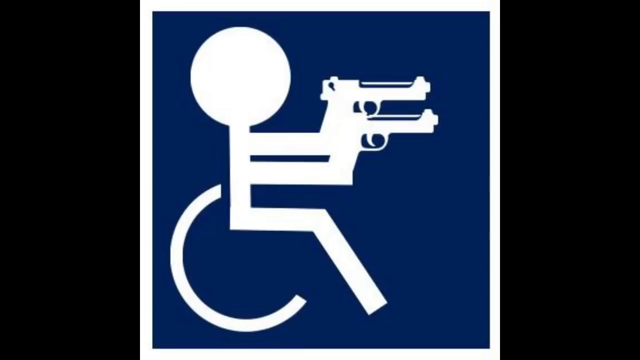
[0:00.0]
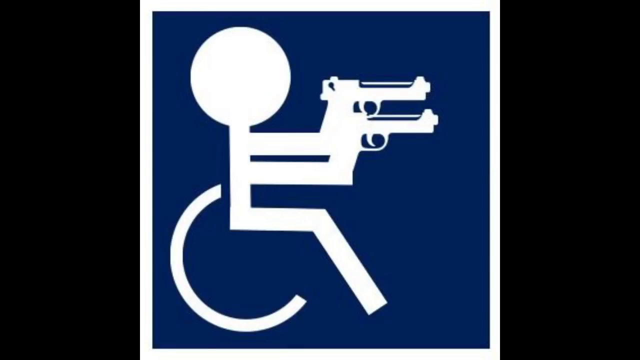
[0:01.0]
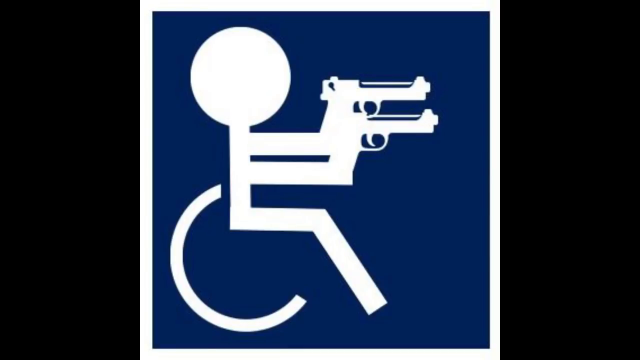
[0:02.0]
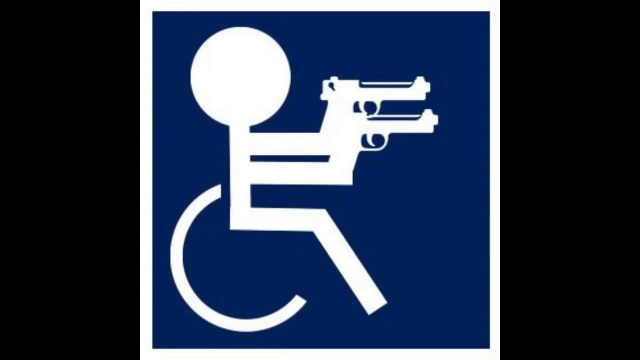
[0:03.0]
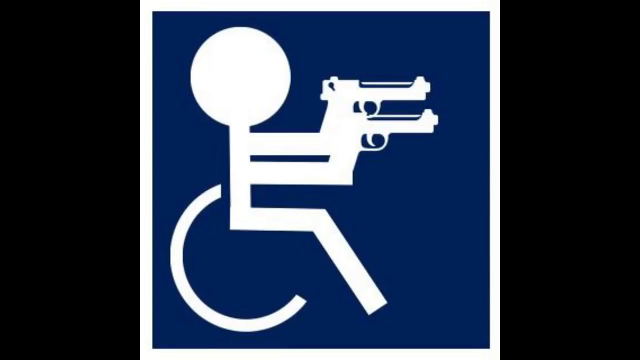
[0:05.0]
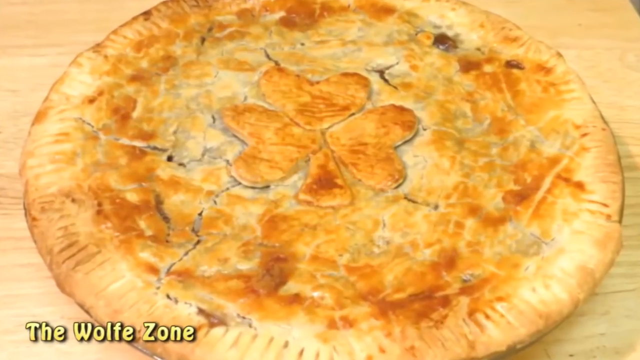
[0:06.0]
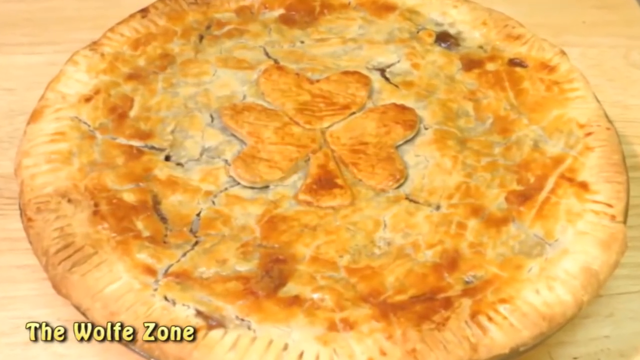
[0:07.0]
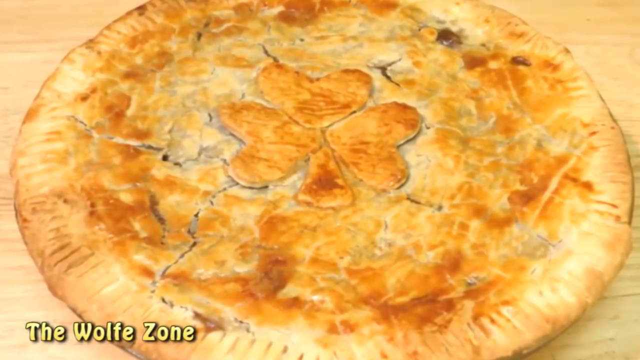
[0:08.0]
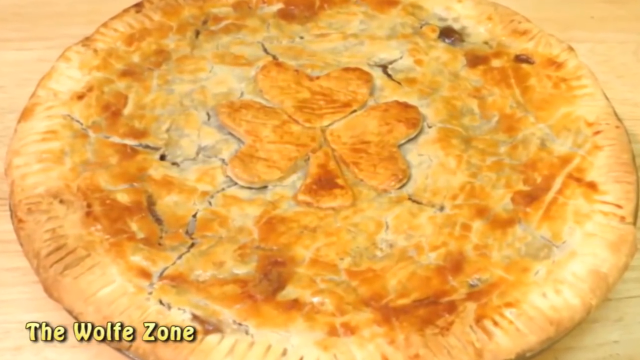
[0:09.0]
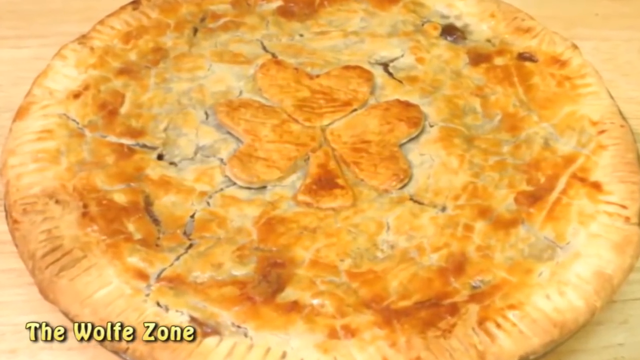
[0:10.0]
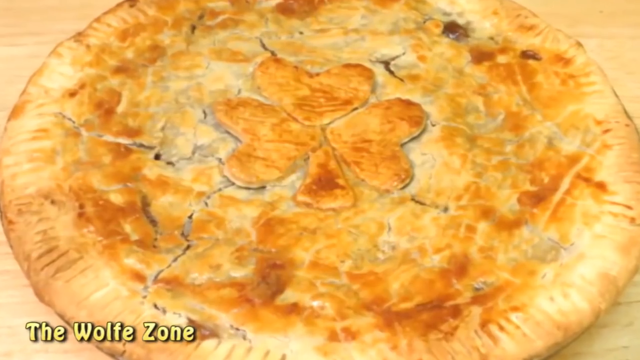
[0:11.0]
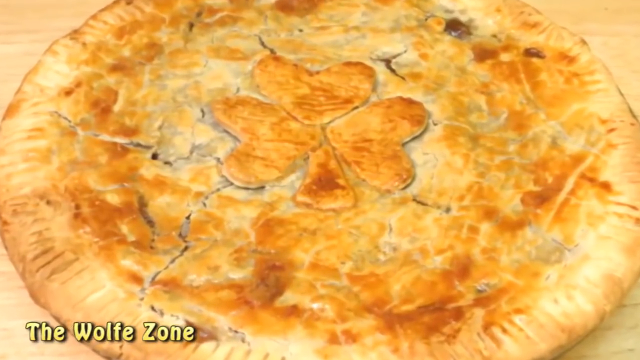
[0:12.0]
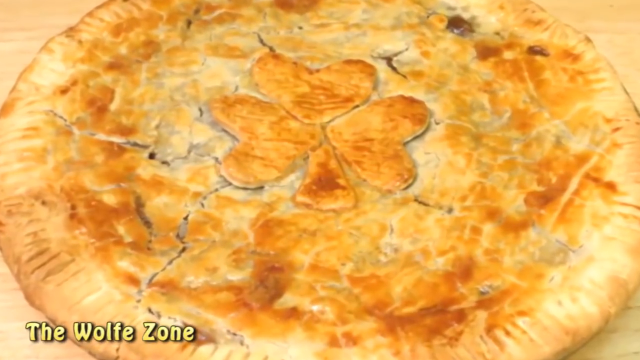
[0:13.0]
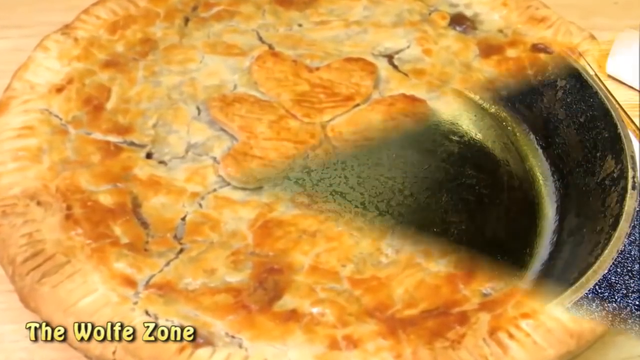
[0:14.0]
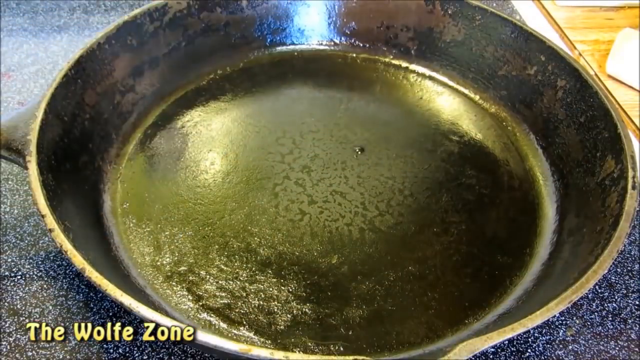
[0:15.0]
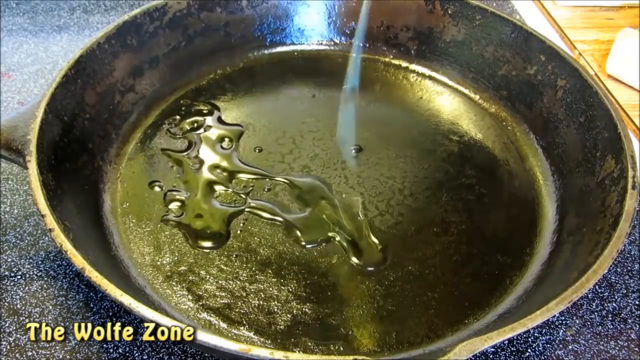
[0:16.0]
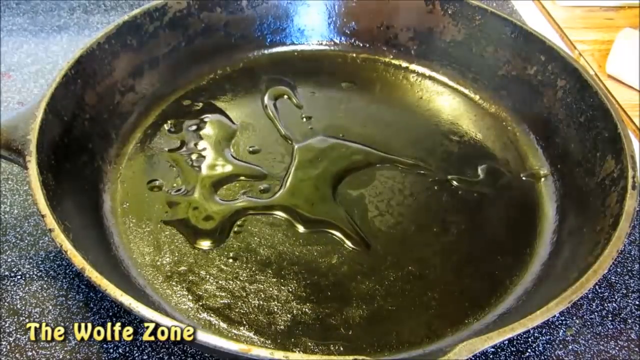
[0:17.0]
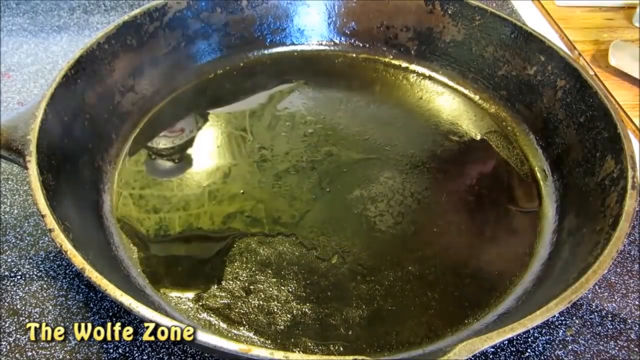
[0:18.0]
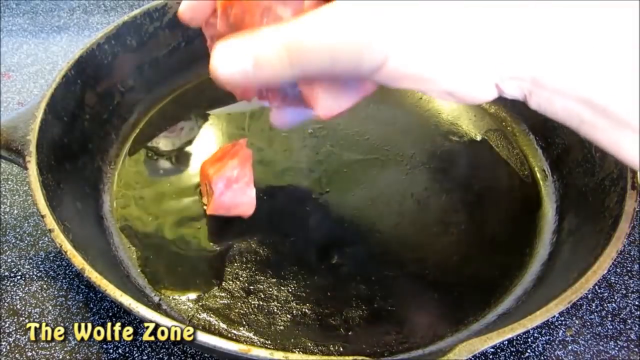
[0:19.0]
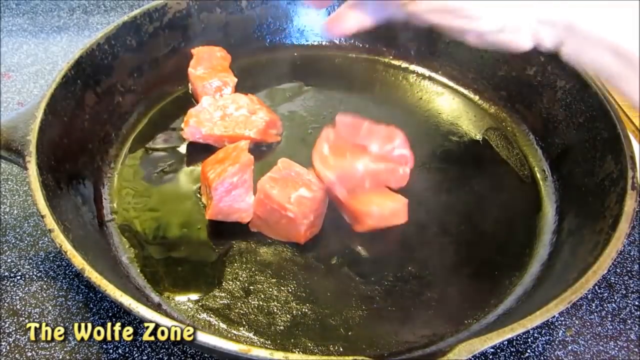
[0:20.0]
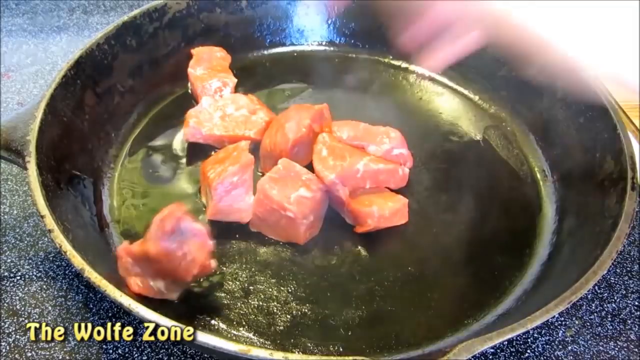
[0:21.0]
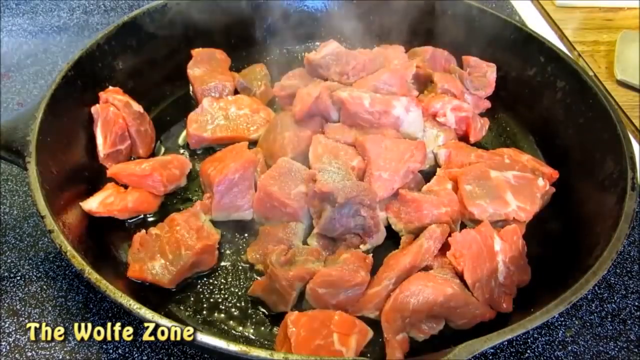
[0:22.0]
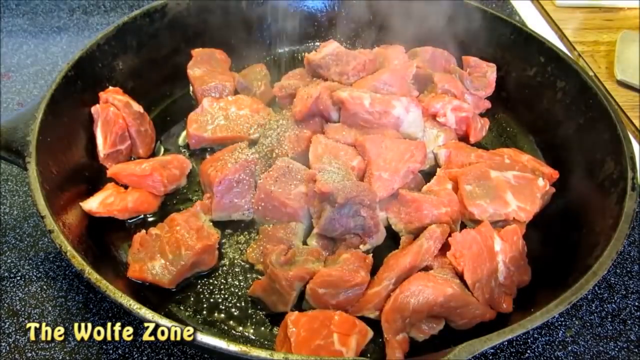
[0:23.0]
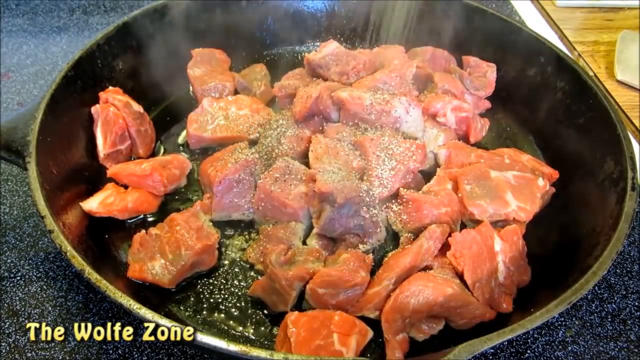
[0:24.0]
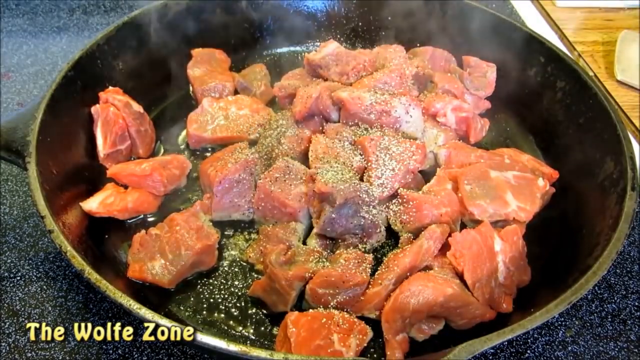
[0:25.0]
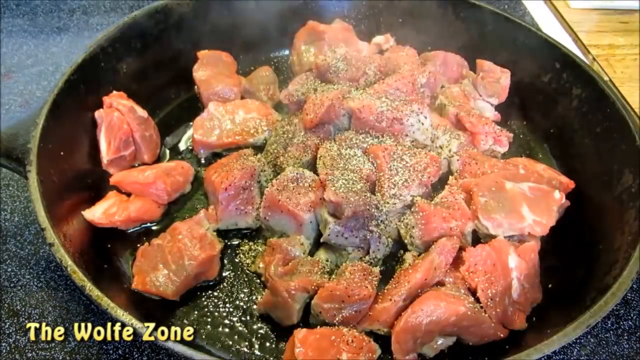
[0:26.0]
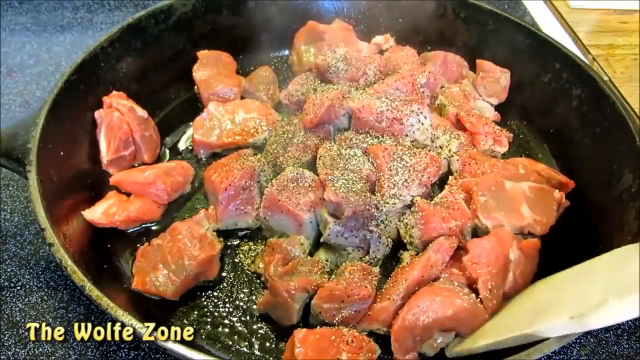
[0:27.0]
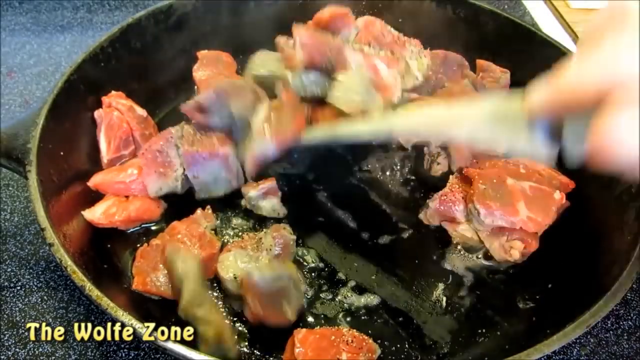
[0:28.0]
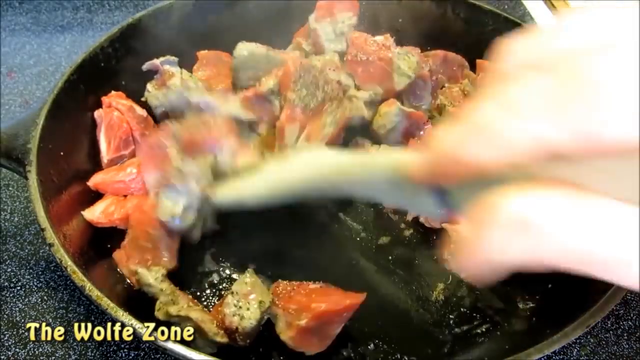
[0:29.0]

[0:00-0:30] The video opens on a picture of a person in a wheelchair, the handicap symbol, holding a Beretta 9mm handgun in each hand. Next comes a picture of some kind of really dry pie, or something that looks like a pie, with one of the breaded sections cut into a three-leaf clover, and text at the bottom of the screen beginning "the wolf". Then an empty pan appears. Someone pours oil into the hot pan and places cubes of meat, steak, in it. A pepper mill is used to coat the meat in pepper, and apparently salt as well, and a spatula moves the meat around so it cooks evenly on all sides. It appears this may be some type of cooking channel showing viewers how to cook.